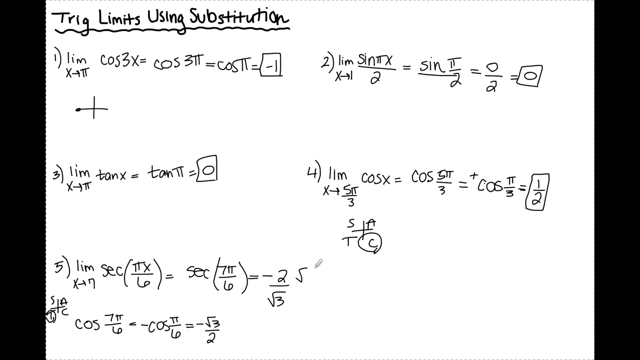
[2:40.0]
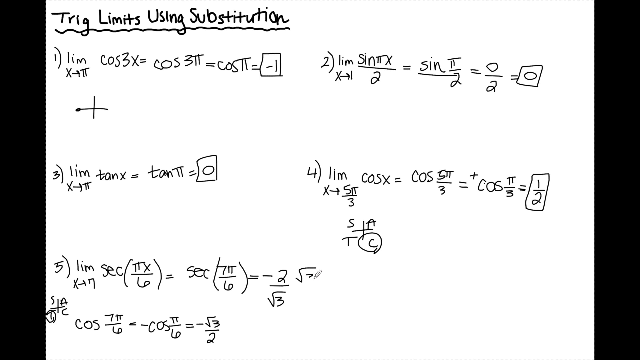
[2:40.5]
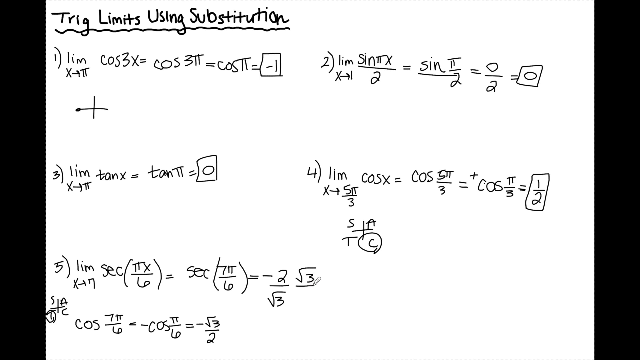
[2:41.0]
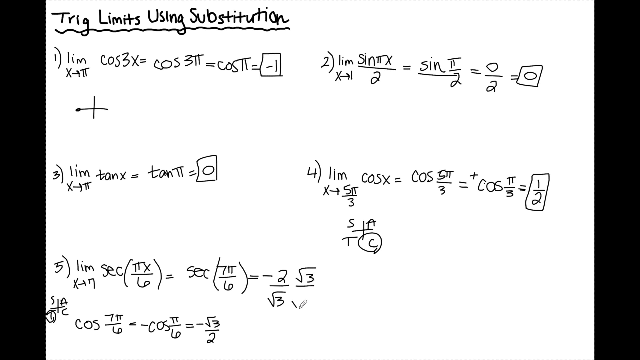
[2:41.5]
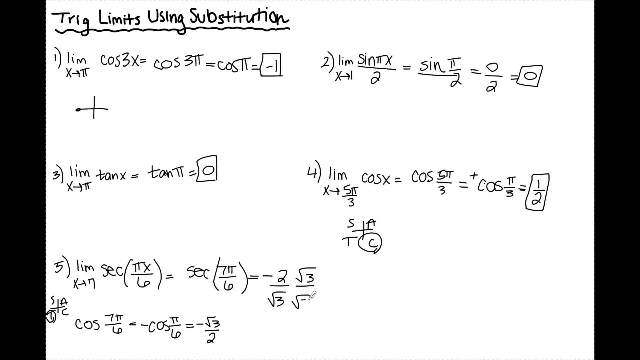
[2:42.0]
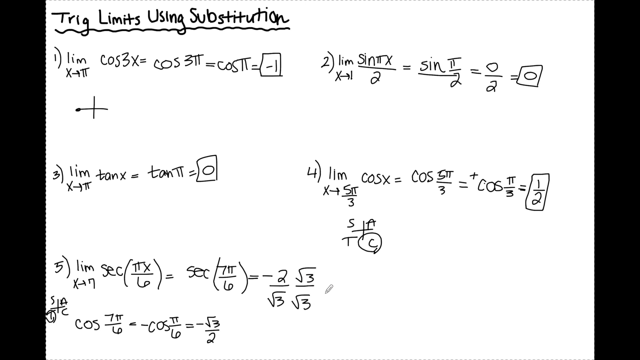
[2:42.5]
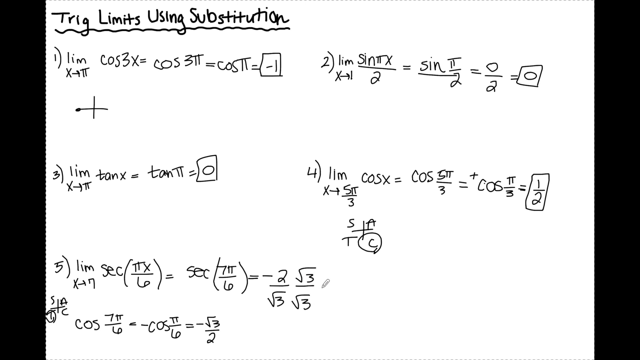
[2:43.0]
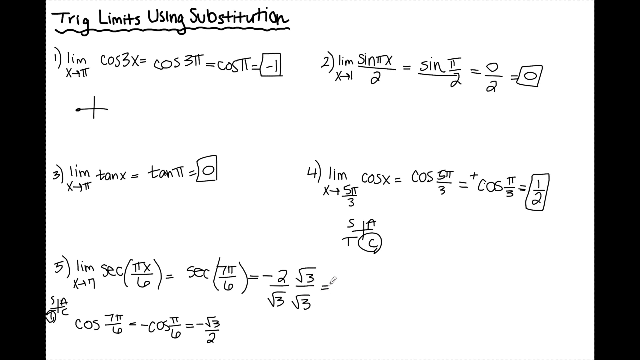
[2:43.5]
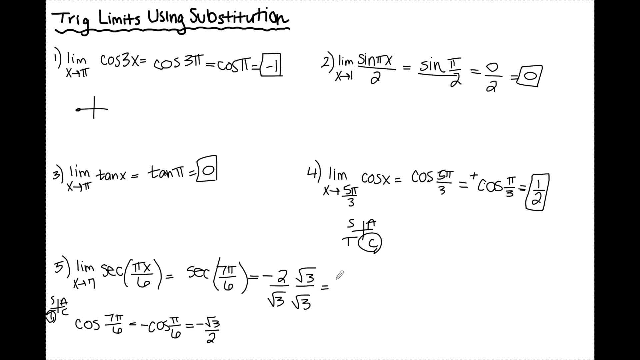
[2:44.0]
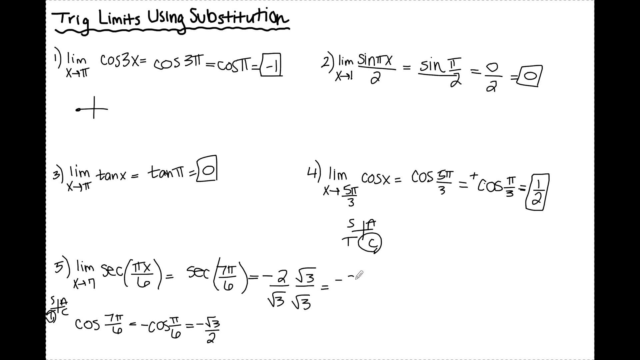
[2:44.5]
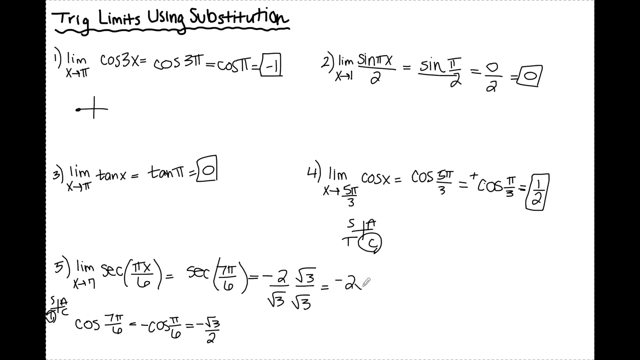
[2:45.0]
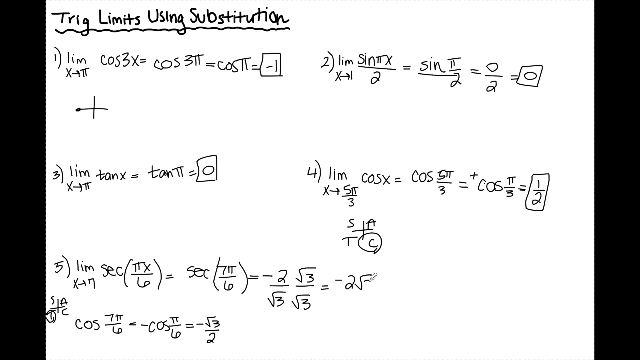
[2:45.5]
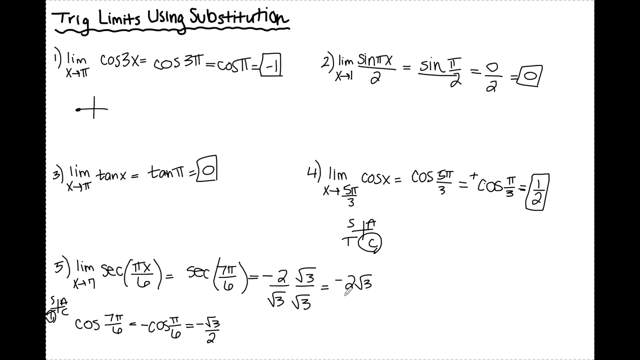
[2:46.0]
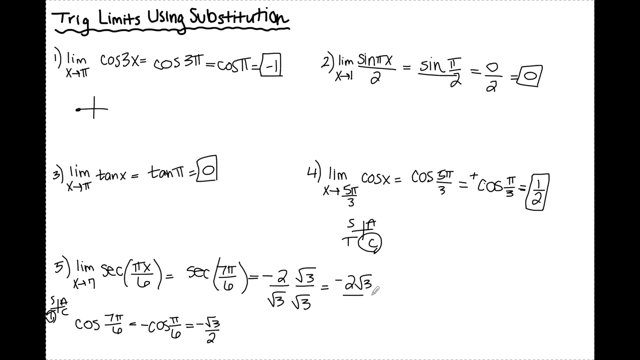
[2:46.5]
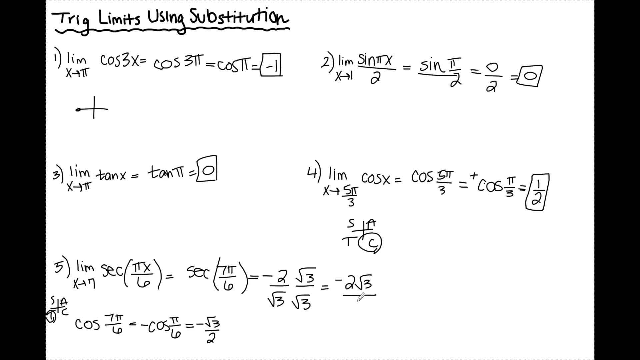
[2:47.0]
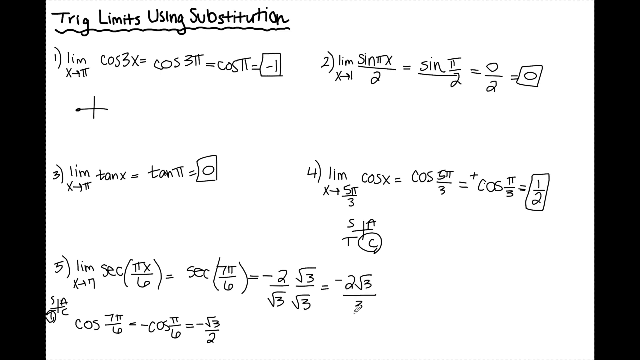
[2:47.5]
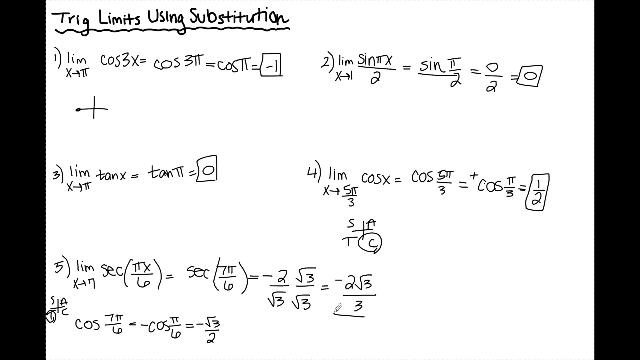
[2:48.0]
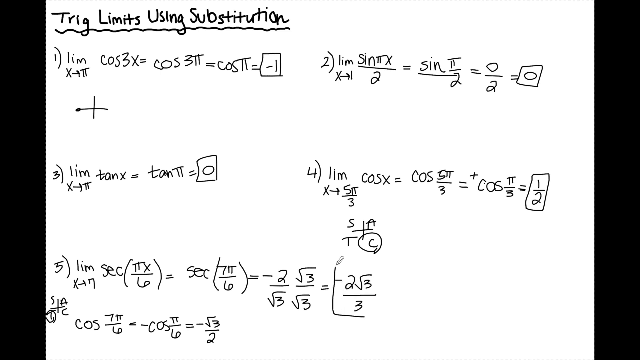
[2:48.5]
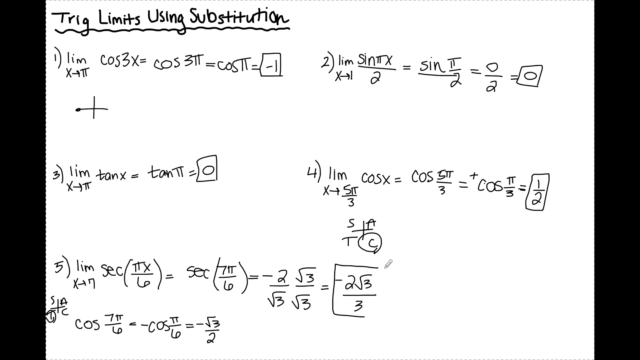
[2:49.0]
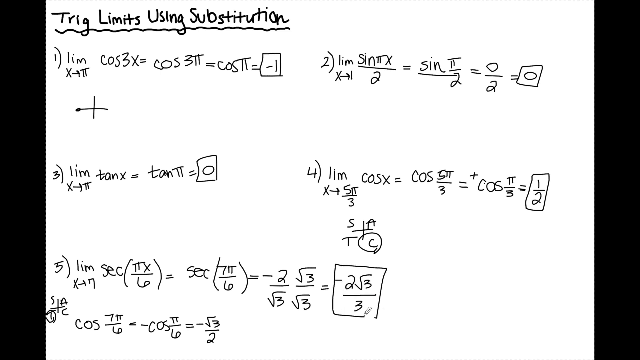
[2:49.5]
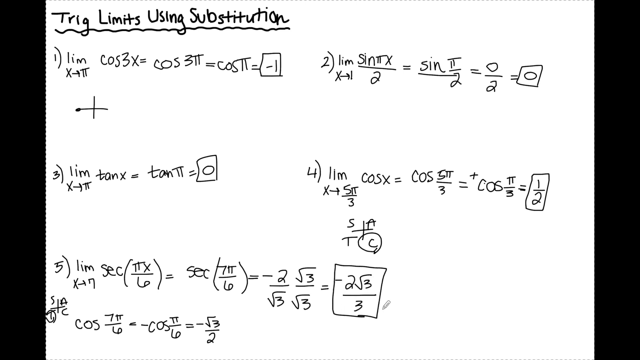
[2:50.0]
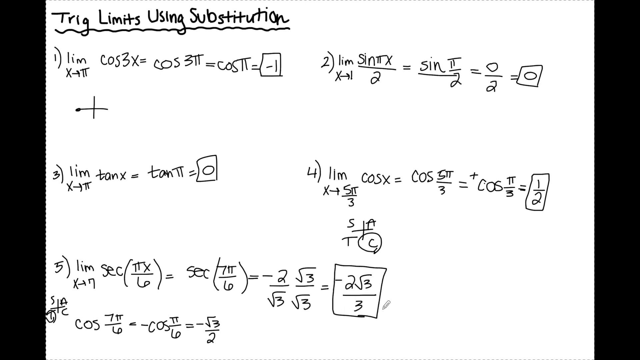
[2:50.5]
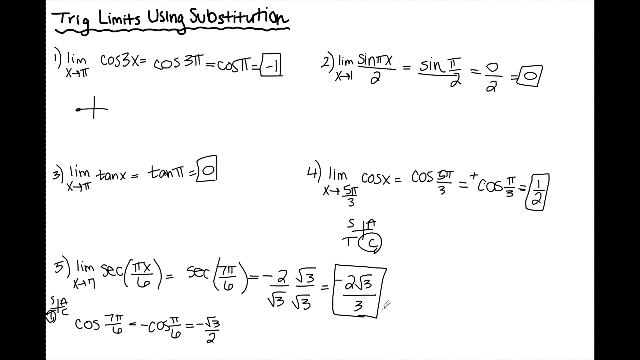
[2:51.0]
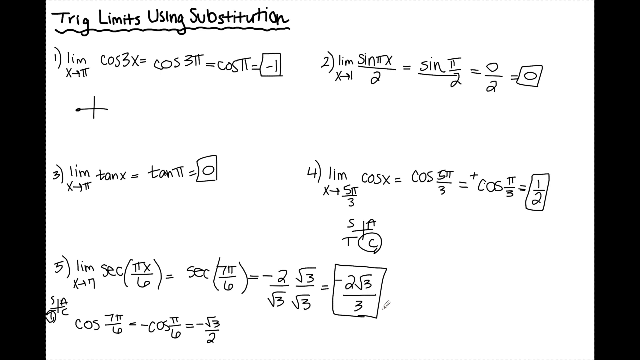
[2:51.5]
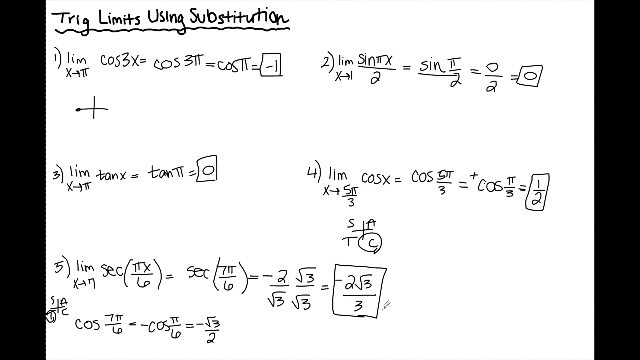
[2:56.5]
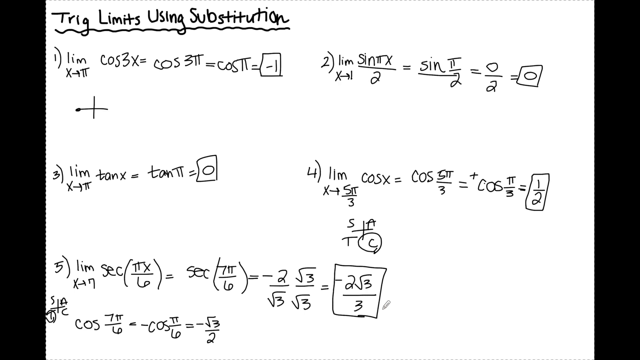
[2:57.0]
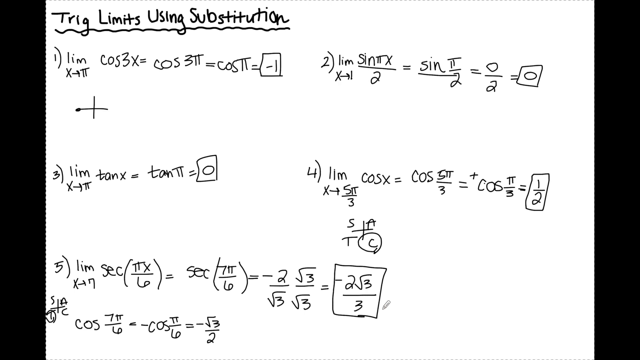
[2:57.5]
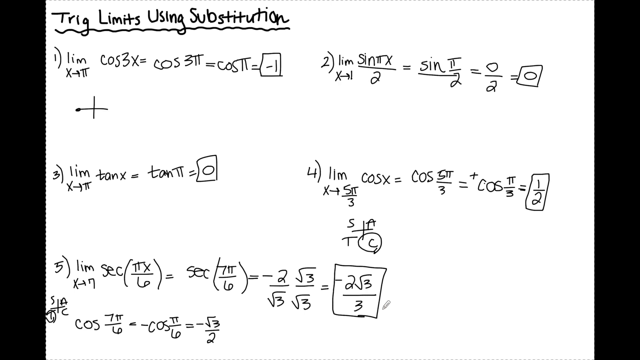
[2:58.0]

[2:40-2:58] The cursor writes out the new square root expression, square root 3 divided by square root 3. It adds another equals sign and writes negative 2 square root 3 divided by 3, then draws a box around it. All five equations now have boxes around their answers on the white background. The cursor stays stationary after the new box on equation 5 while the rest of the page remains static, with all equations completed in black writing and the title at the top still reading "trig limits using substitution" with the underline beneath it.